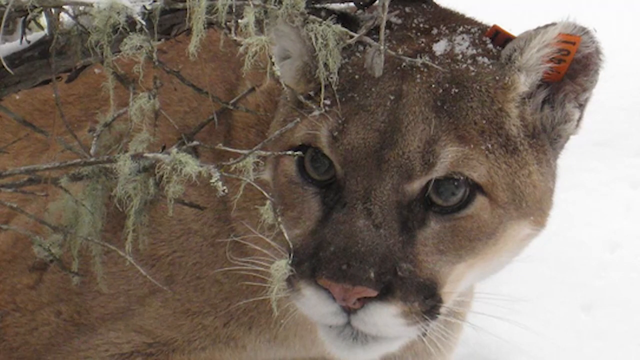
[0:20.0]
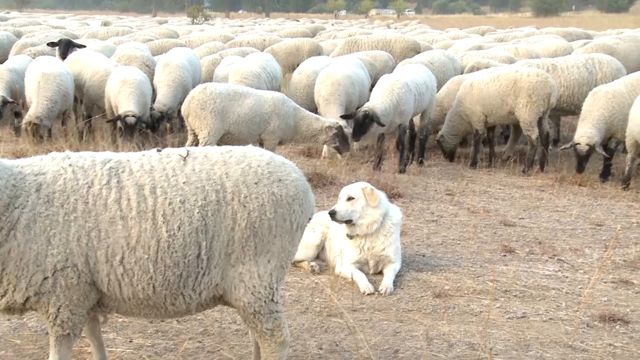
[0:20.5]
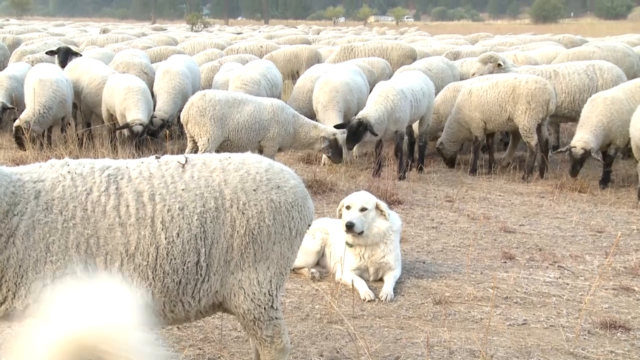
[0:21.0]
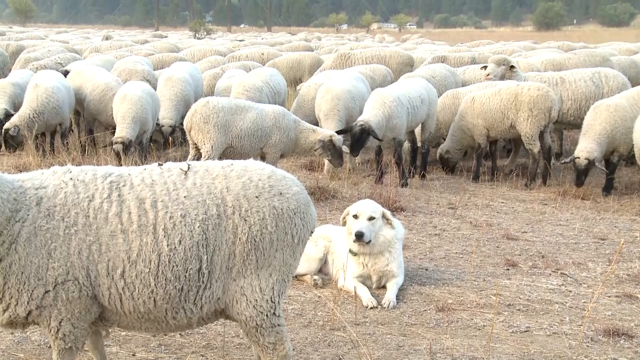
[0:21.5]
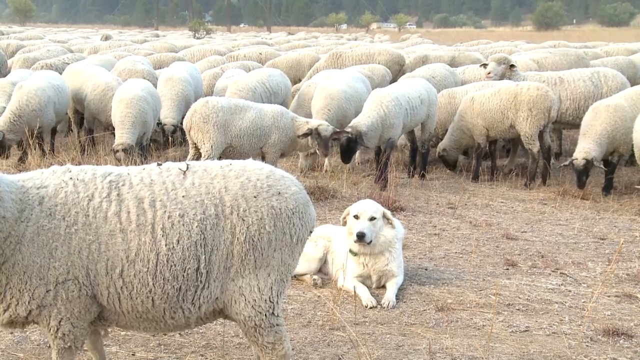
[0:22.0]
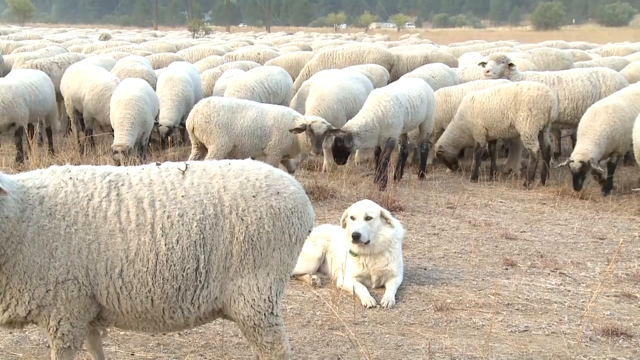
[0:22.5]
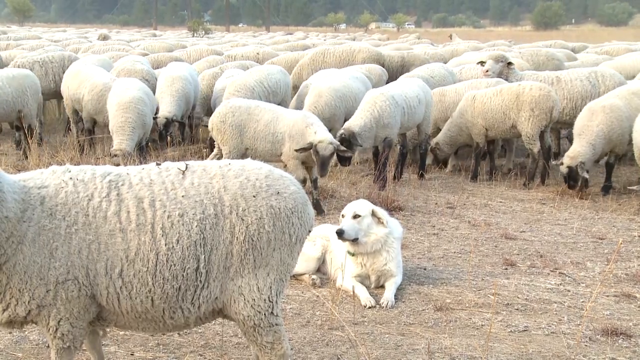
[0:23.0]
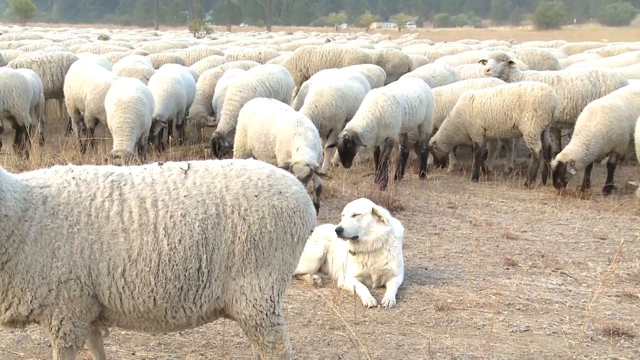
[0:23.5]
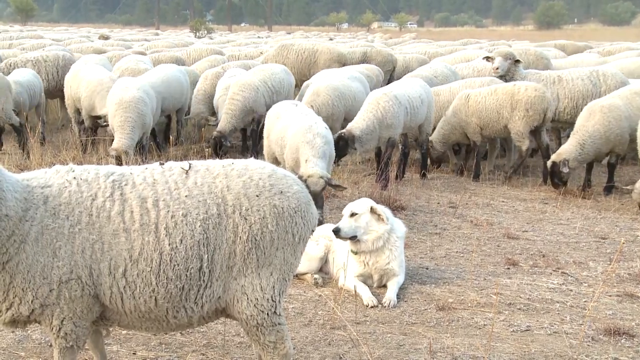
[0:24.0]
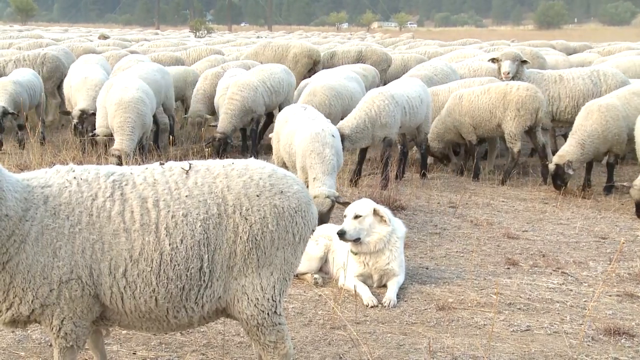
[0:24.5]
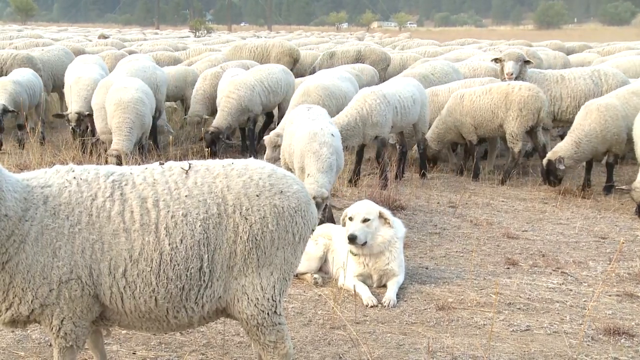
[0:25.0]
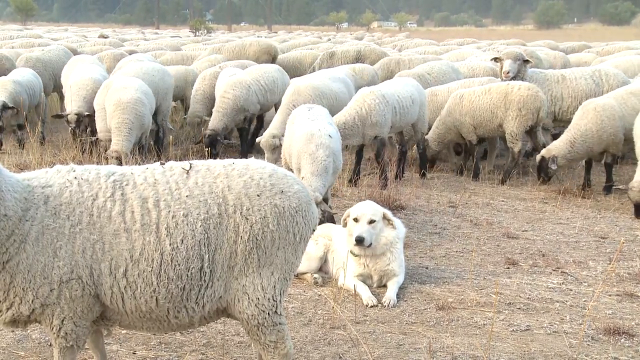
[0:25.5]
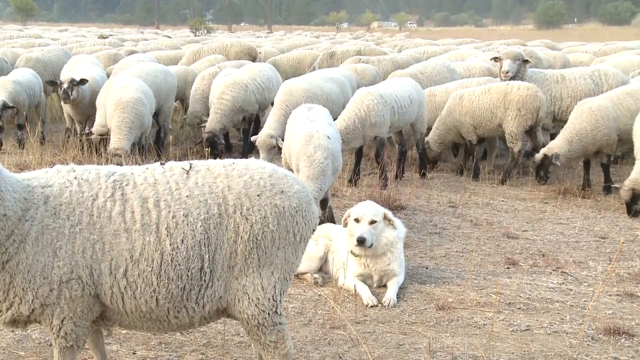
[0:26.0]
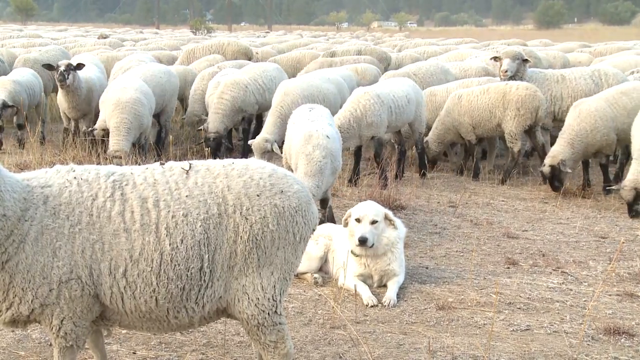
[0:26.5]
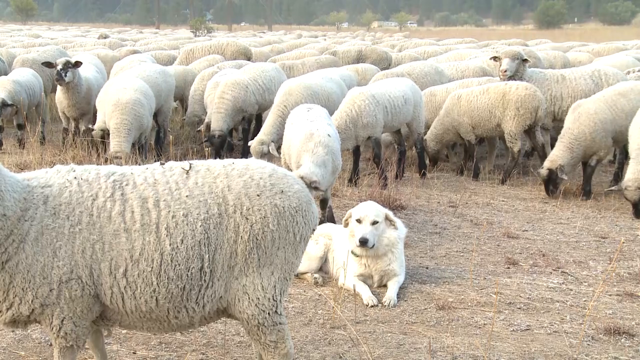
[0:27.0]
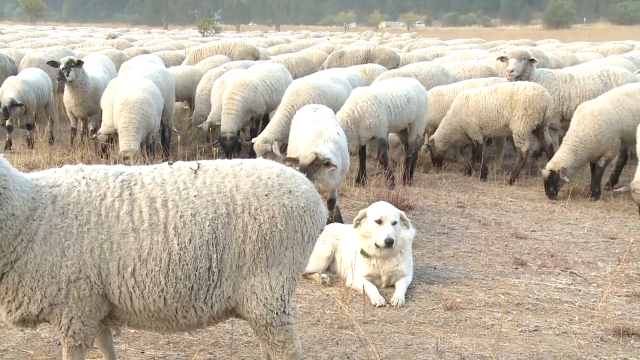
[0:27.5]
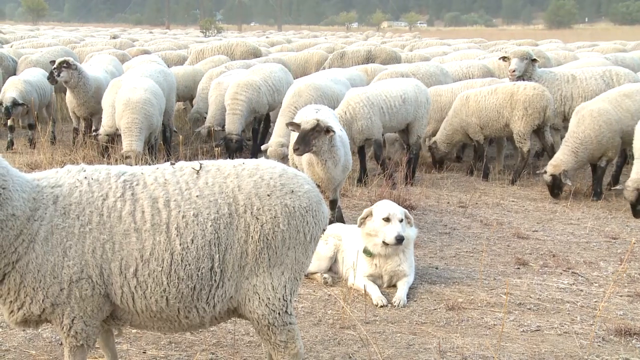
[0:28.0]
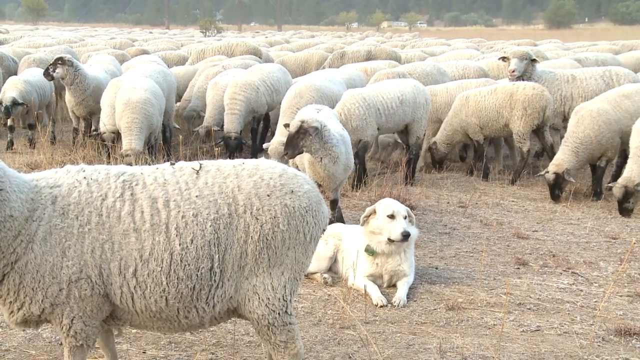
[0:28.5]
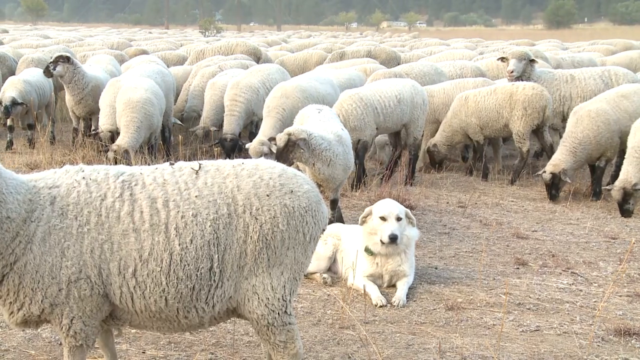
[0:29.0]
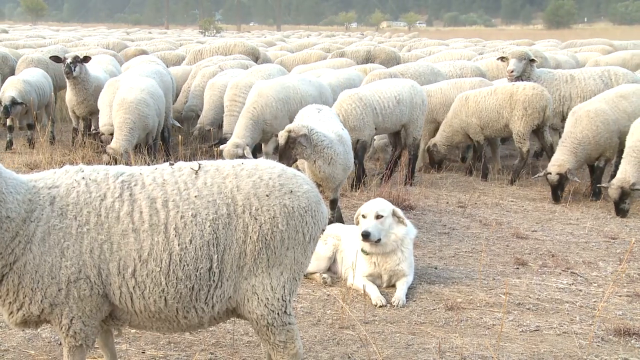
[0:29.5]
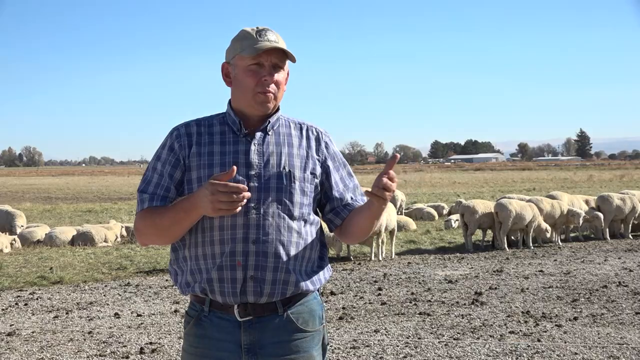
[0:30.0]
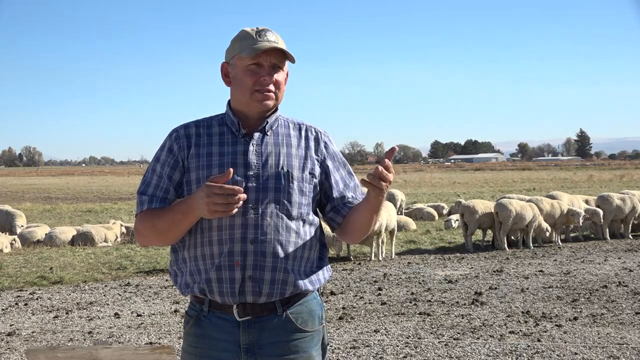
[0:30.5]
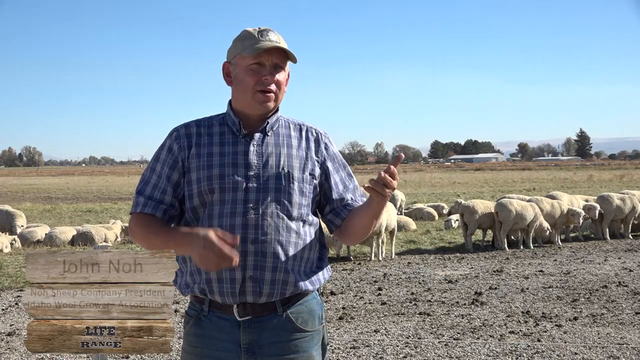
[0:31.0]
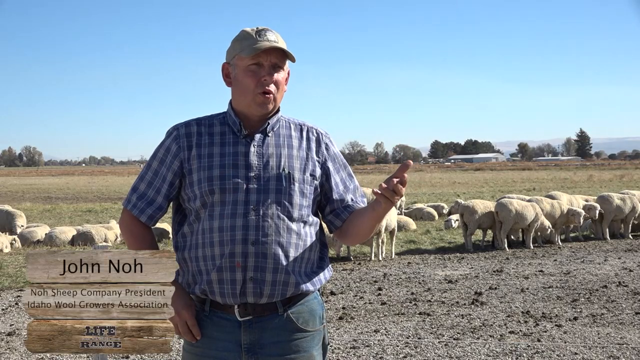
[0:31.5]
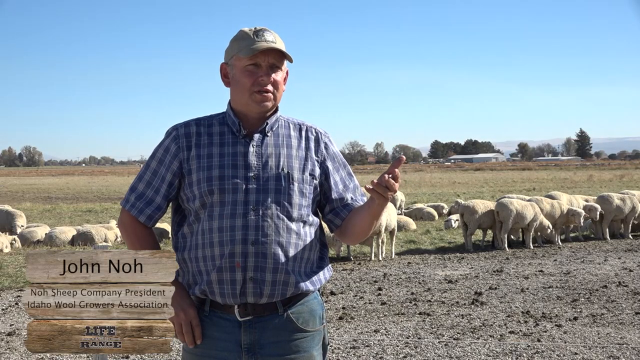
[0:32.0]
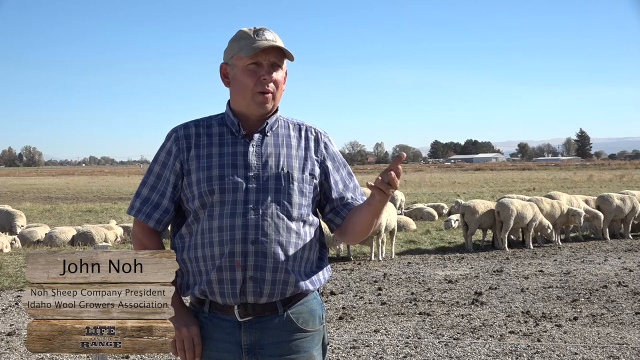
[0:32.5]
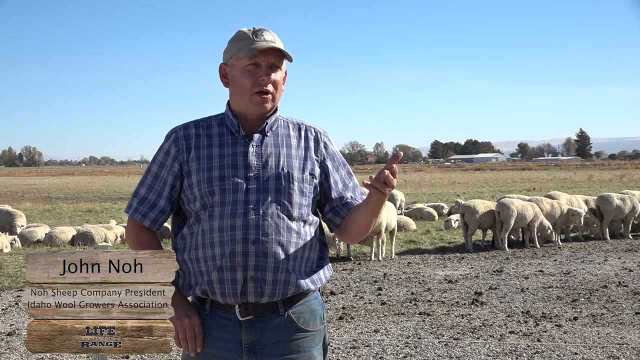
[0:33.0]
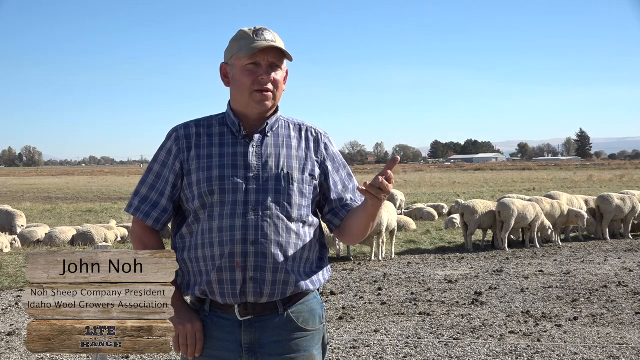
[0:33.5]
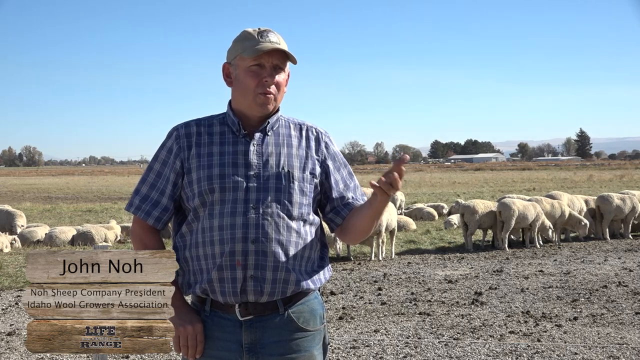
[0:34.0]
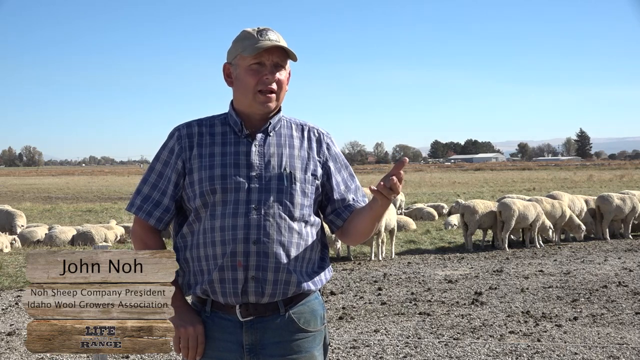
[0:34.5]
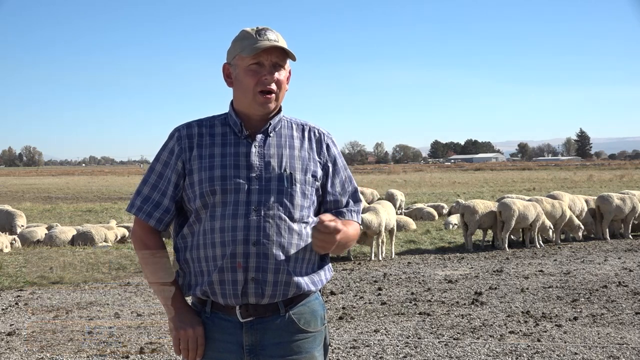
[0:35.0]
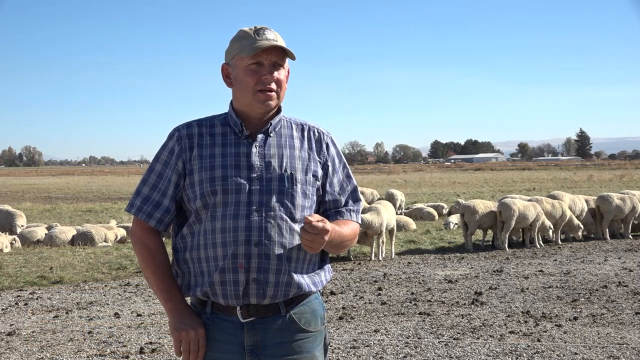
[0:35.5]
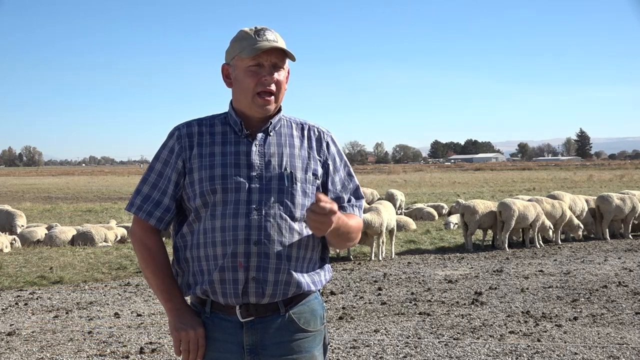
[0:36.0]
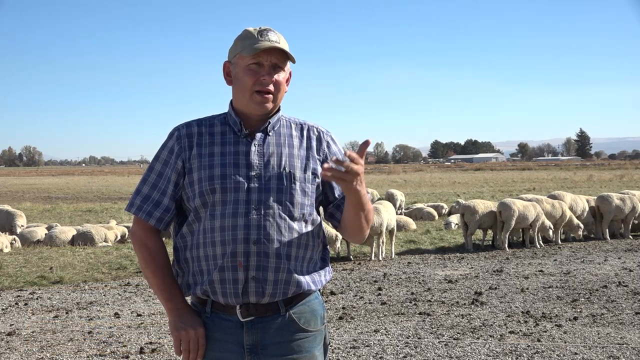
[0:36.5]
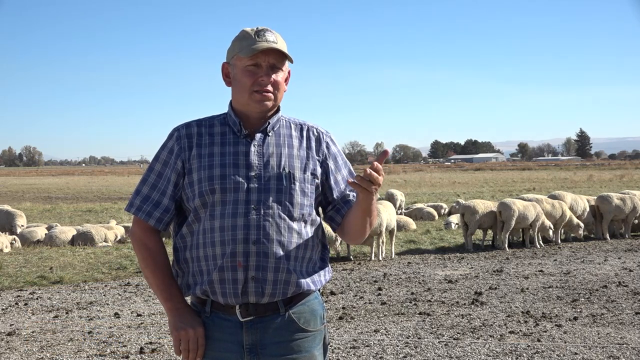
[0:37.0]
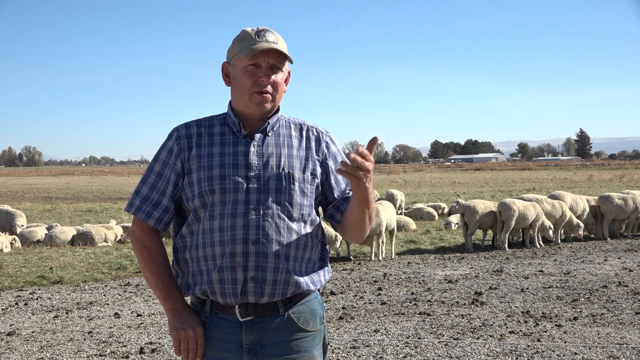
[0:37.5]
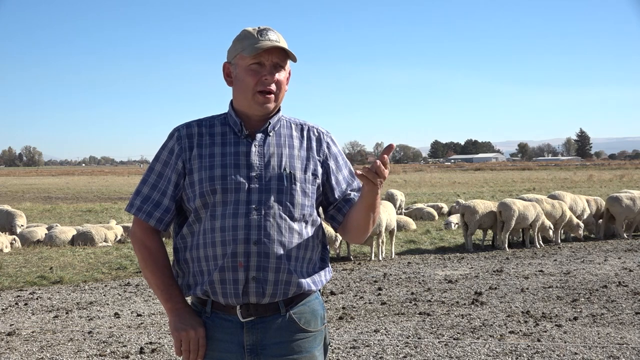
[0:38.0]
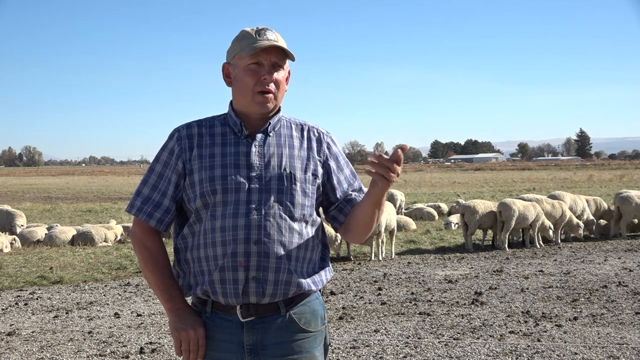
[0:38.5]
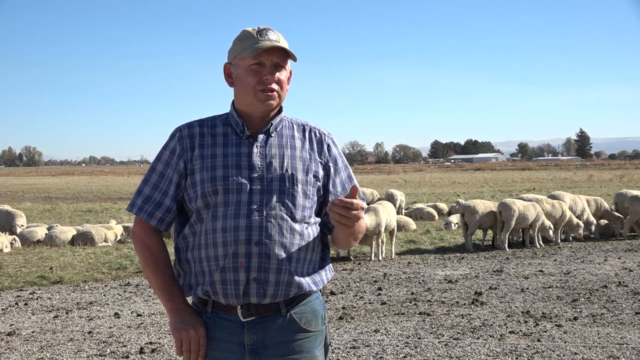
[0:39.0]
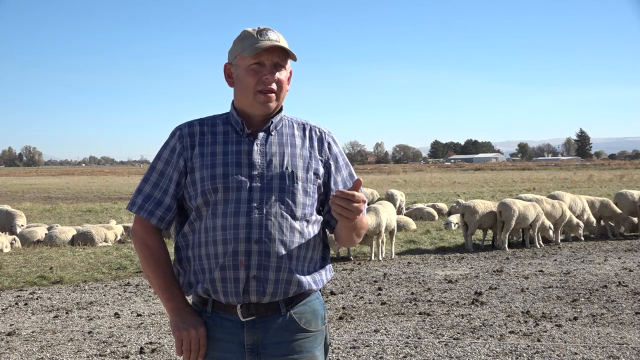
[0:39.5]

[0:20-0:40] White sheep with black mouths graze, and one of the guard dogs, a white dog, lies on the grass watching what is happening. Another sheep goes closer to the dog. A man wearing a gray cap, a checked blue and white shirt, and blue pants is talking; he is John Nor, the president of Nor Sheep Company. Behind him are white sheep, some grazing and some lying down. In the background are clear blue skies and a few houses further away, surrounded by trees and with white roofs. The ground he is standing on looks very dry and appears to have been overgrazed.